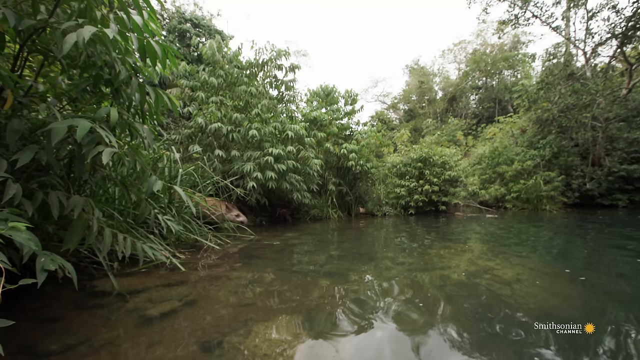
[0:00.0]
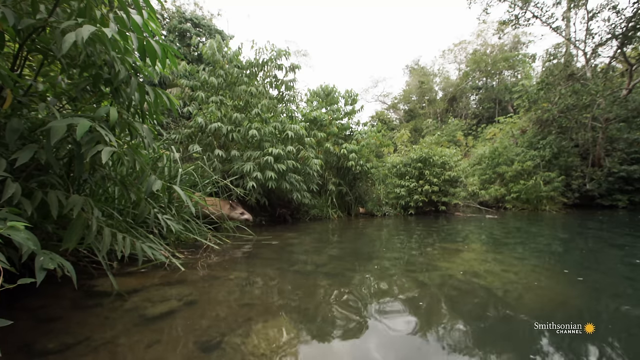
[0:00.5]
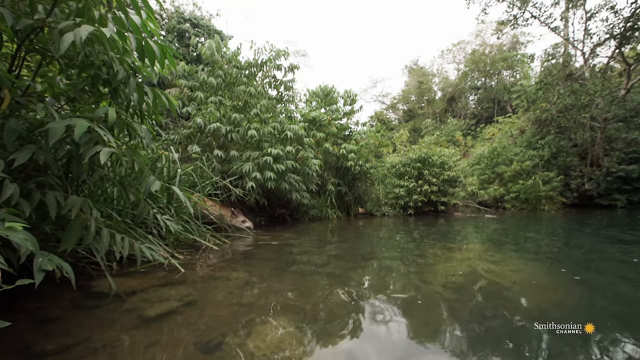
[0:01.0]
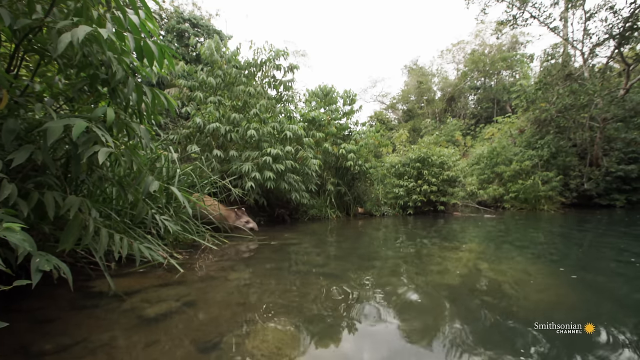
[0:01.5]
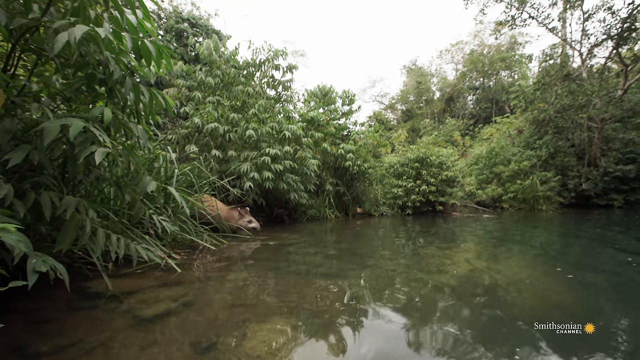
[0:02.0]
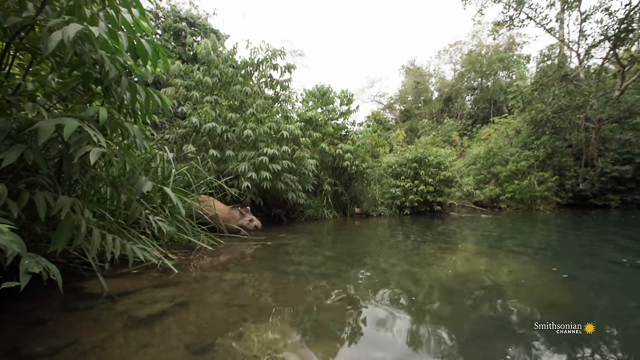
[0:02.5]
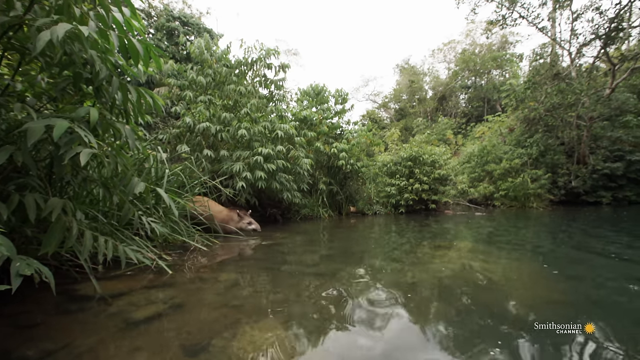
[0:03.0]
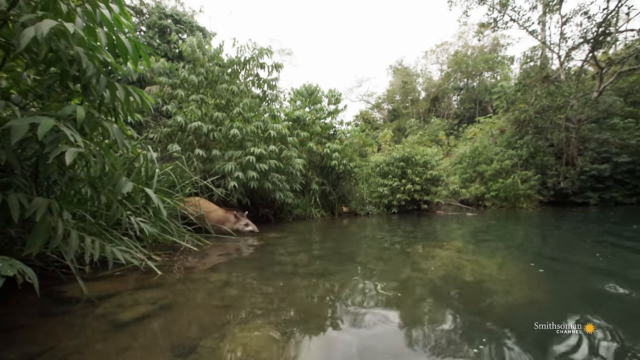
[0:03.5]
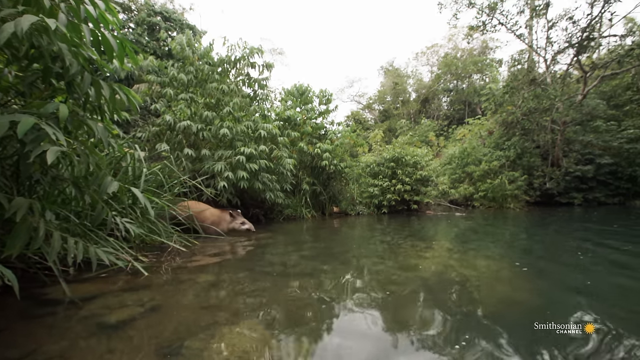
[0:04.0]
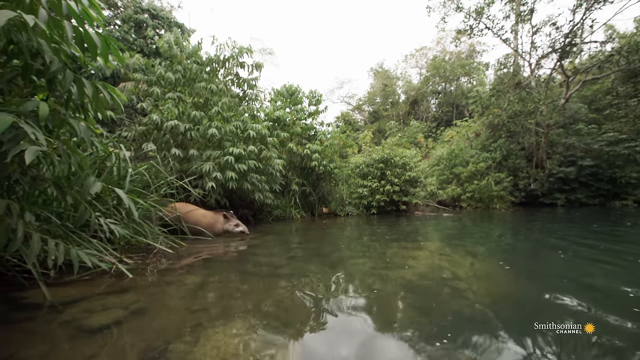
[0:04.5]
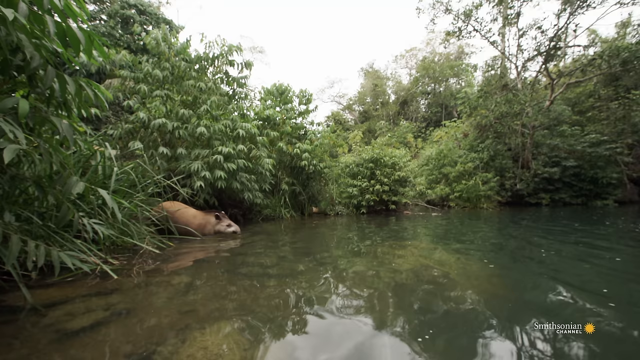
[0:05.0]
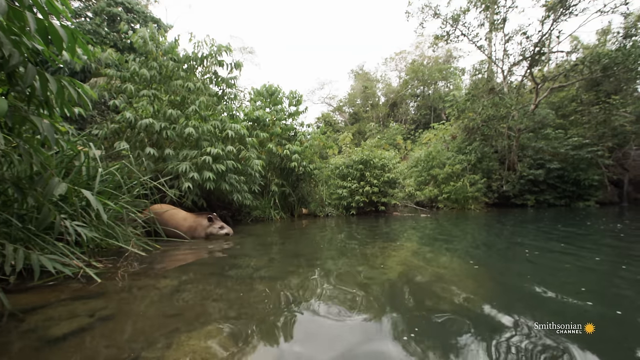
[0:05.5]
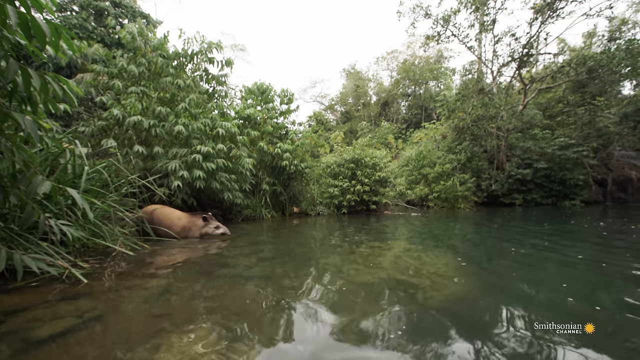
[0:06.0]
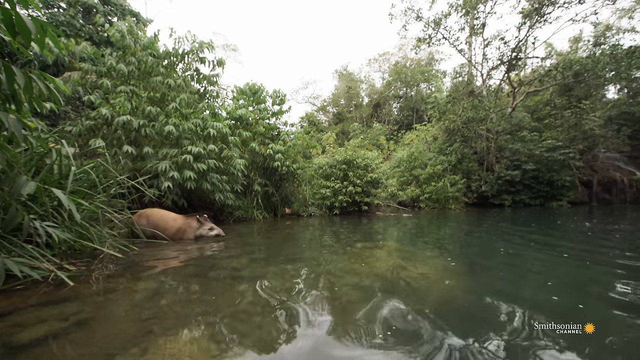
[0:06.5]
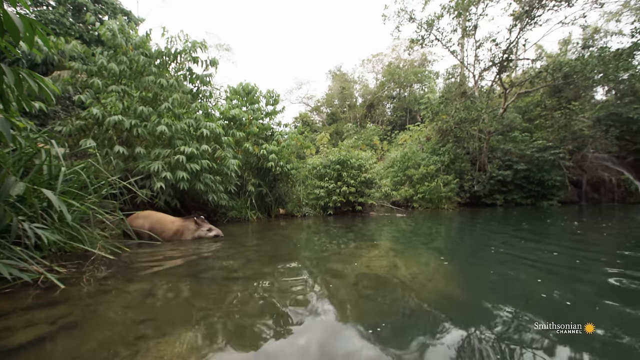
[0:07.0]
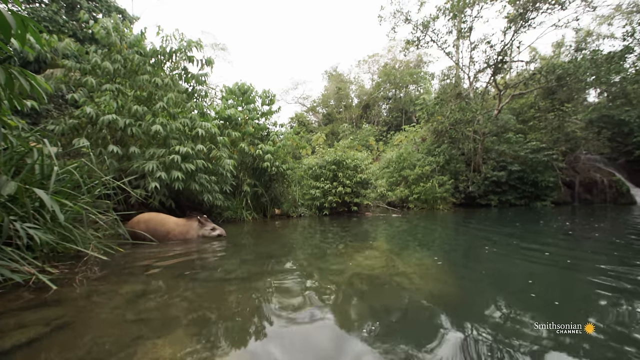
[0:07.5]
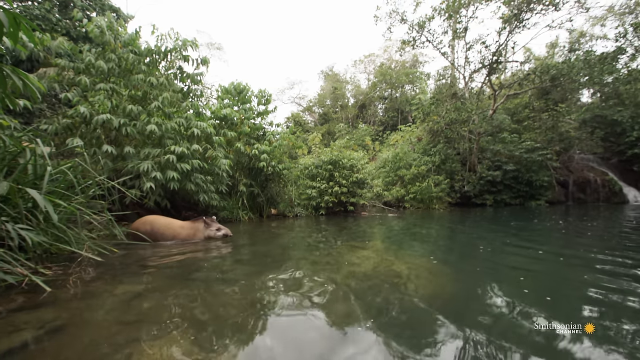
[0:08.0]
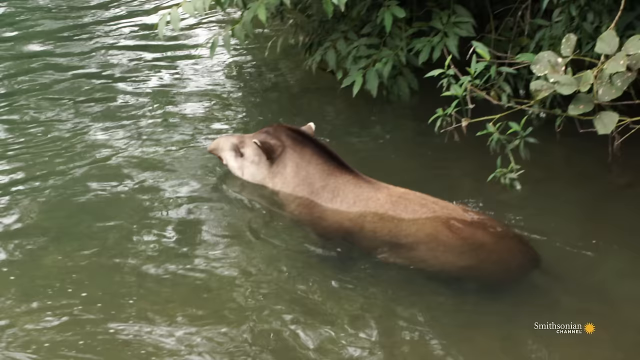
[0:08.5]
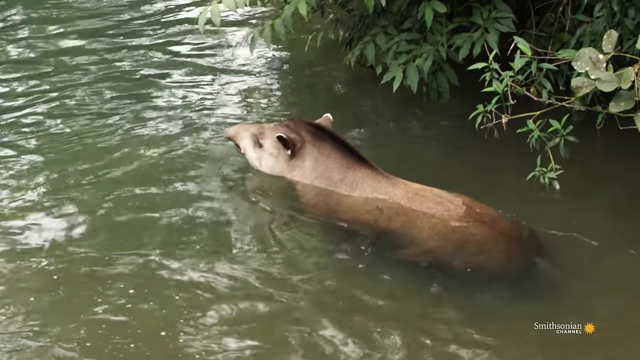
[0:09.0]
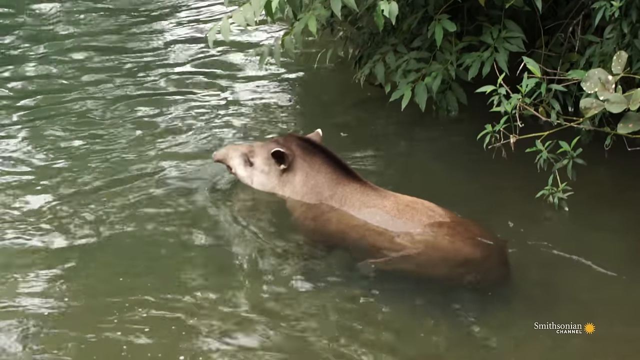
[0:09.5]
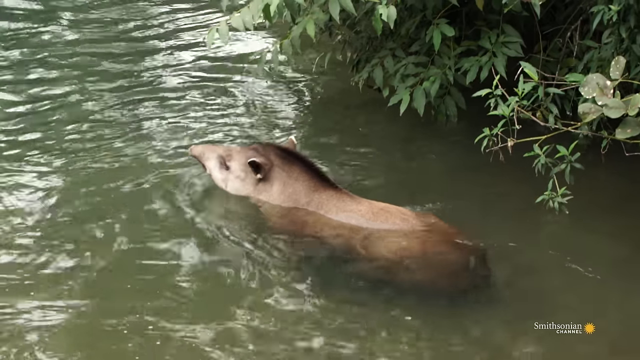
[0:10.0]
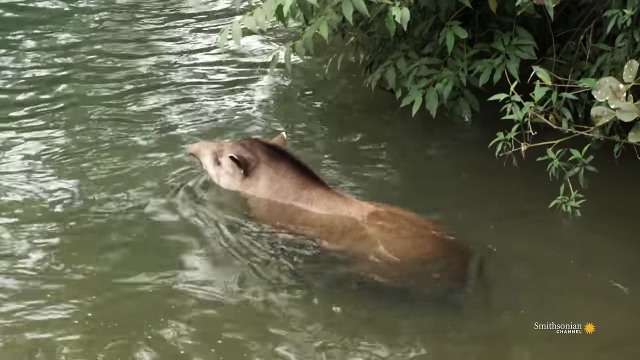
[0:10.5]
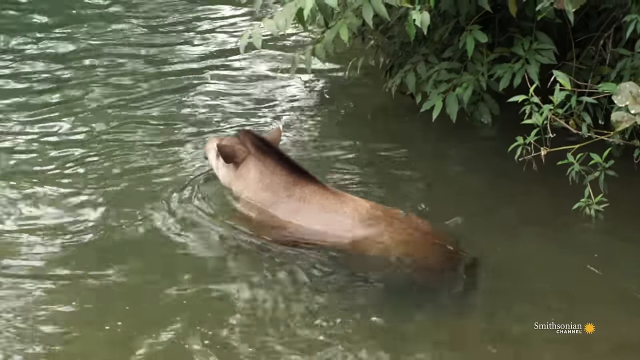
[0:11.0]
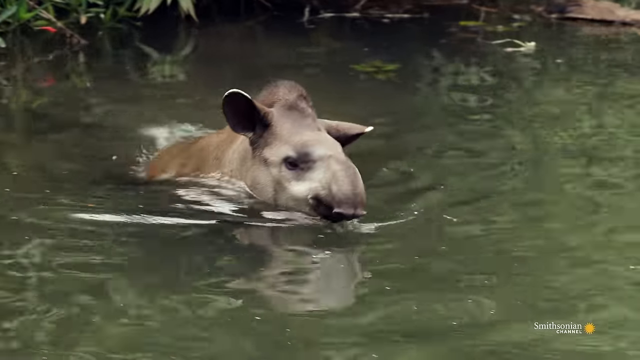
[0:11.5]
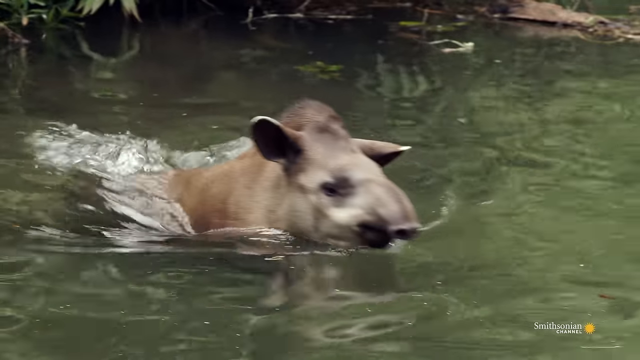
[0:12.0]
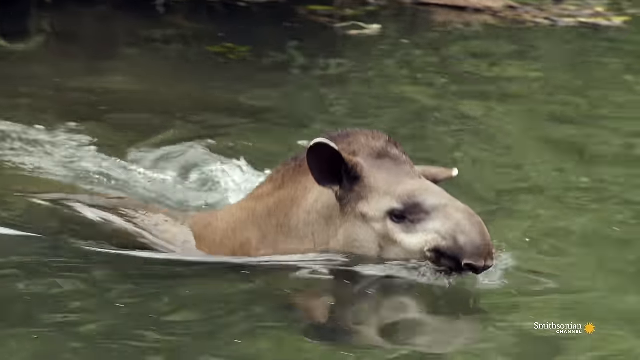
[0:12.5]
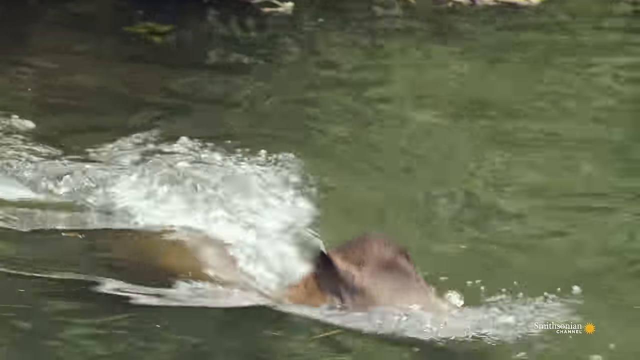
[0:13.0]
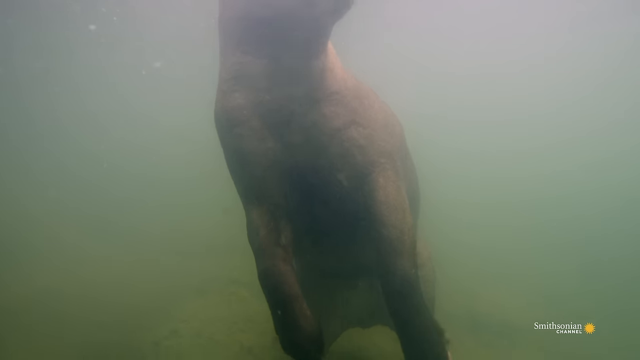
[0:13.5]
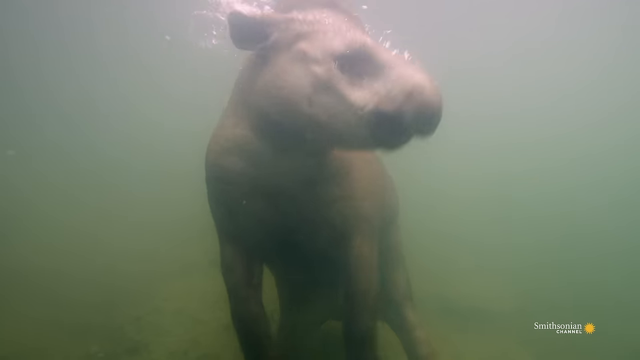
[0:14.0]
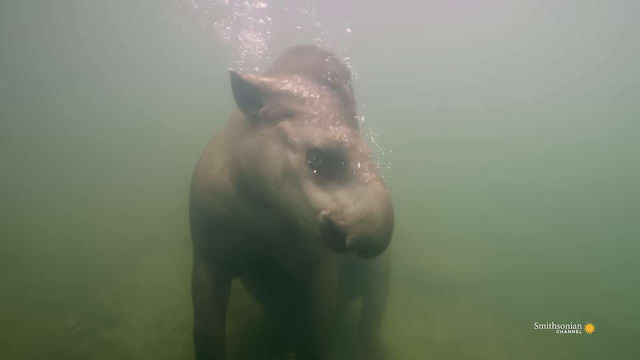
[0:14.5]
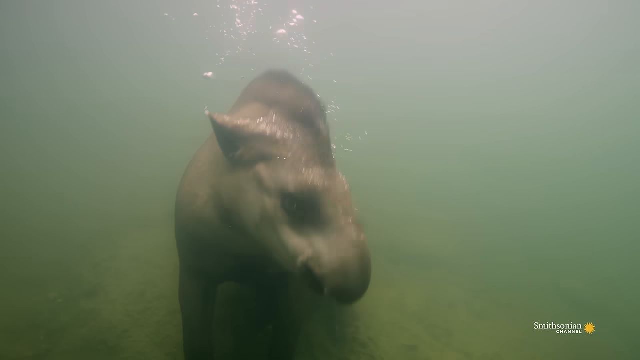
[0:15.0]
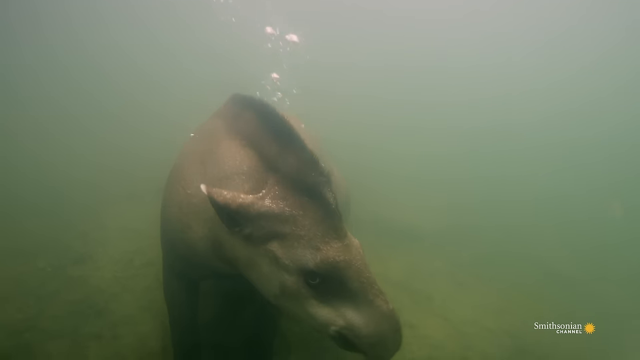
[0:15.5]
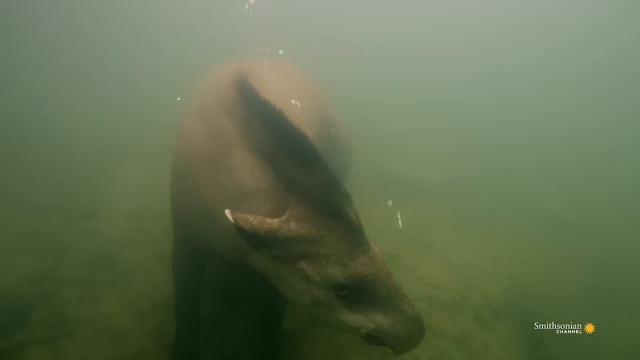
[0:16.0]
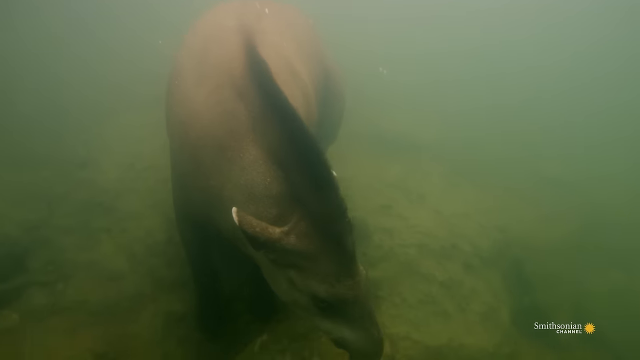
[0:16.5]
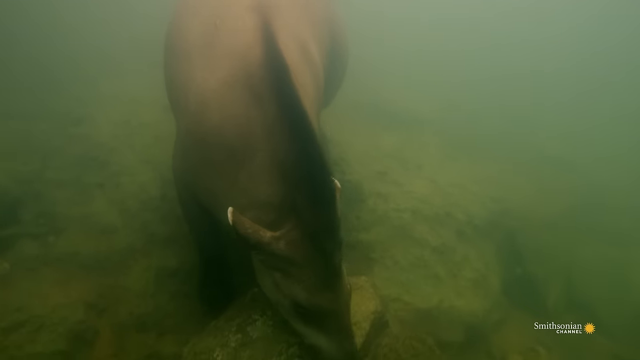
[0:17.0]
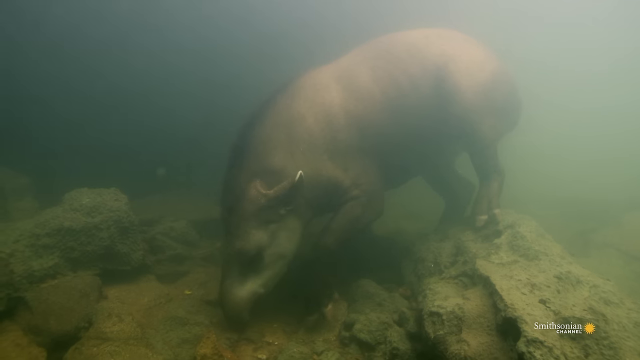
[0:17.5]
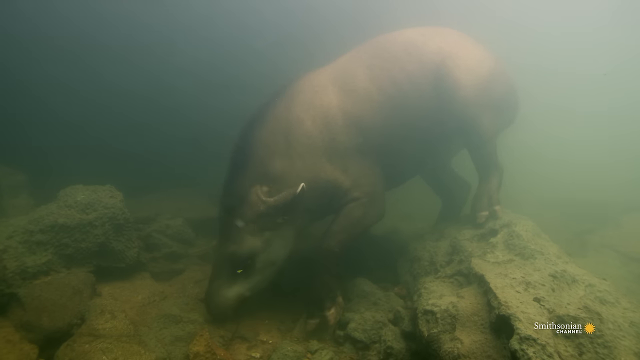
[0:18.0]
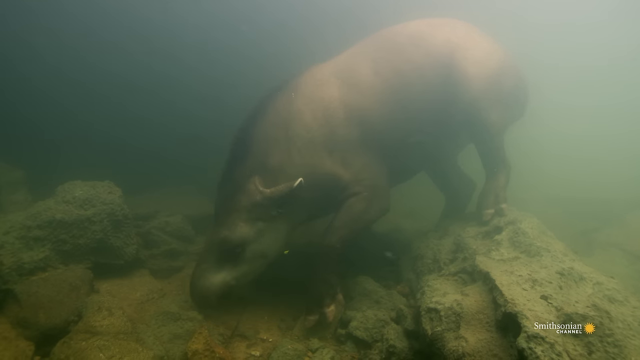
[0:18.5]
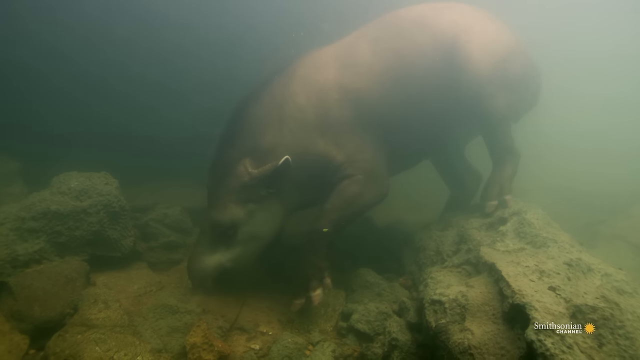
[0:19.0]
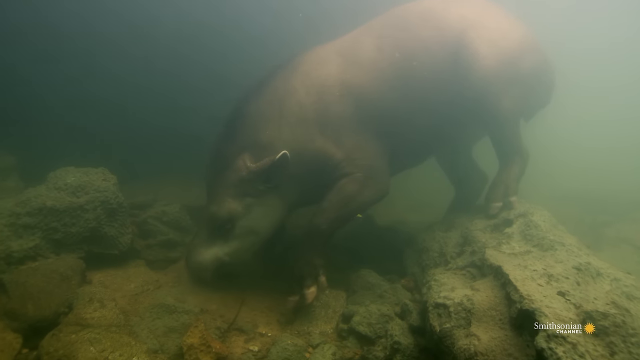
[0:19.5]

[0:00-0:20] An animal comes out of the trees or bushes, from a heavily grown-over area, into some water. The type of animal is unclear: it looks like an elephant, has a cut-off snout and a little mane sort of like a horse's, and kind of looks rat-like, but it is about four feet long and apparently not a rat. It eases itself down into the greenish water, and the filming continues underwater as the animal swims in and goes down to the bottom of a lake, where there are rocks. It stays at the bottom, holding its breath.